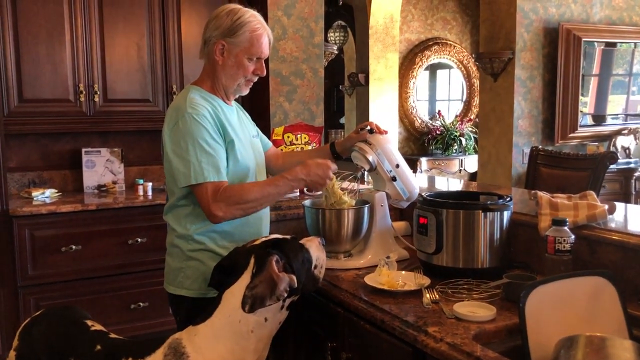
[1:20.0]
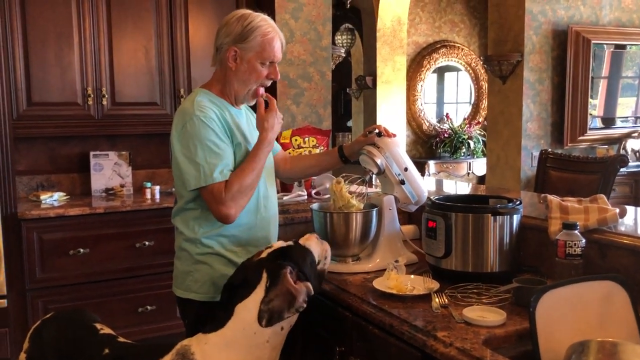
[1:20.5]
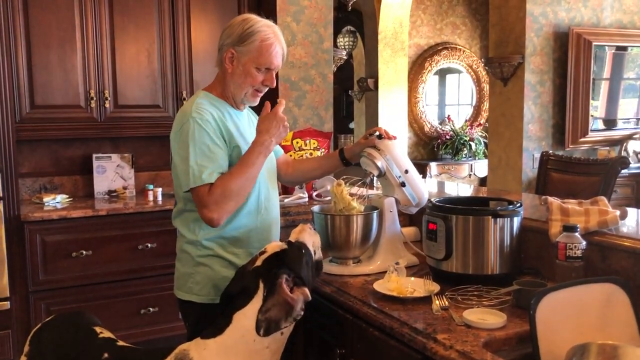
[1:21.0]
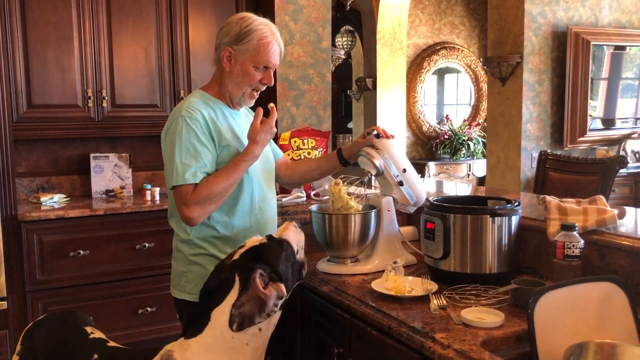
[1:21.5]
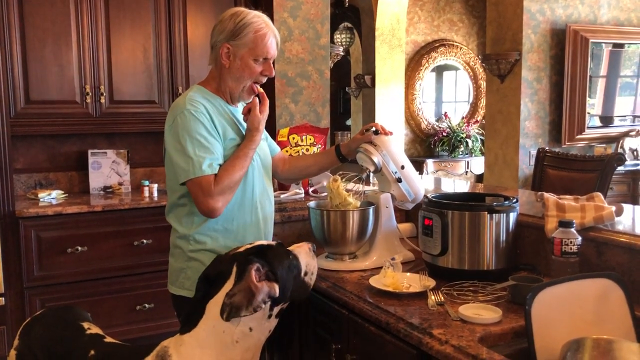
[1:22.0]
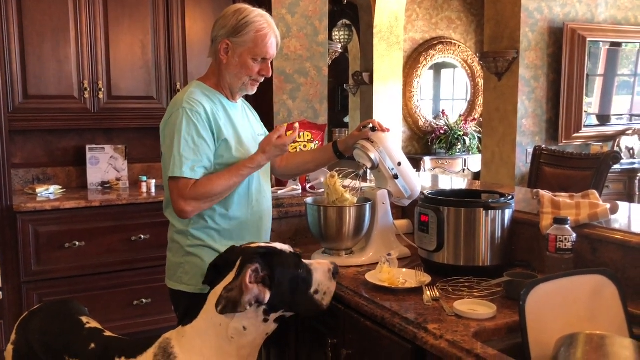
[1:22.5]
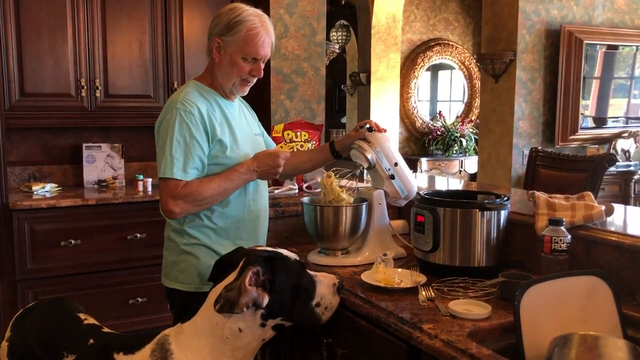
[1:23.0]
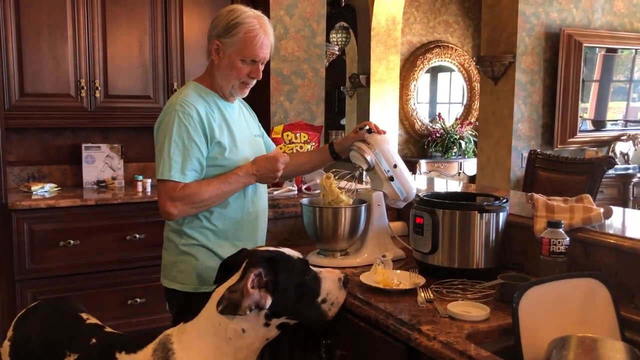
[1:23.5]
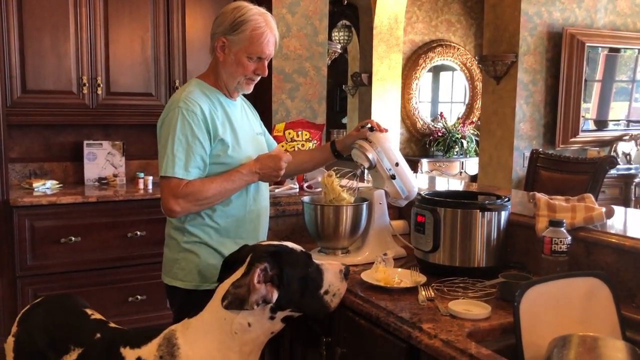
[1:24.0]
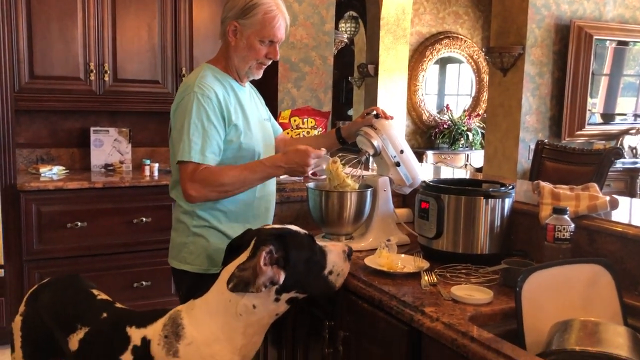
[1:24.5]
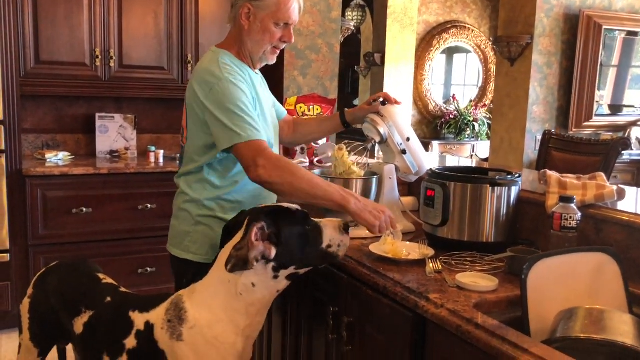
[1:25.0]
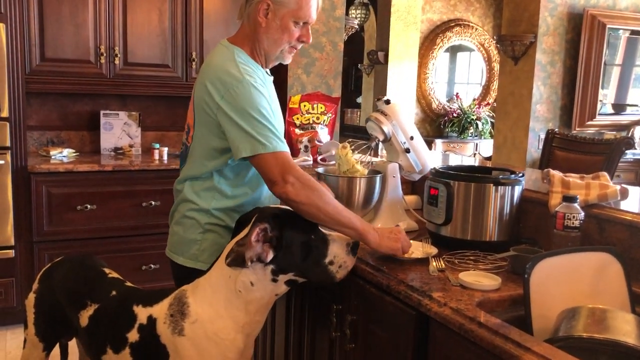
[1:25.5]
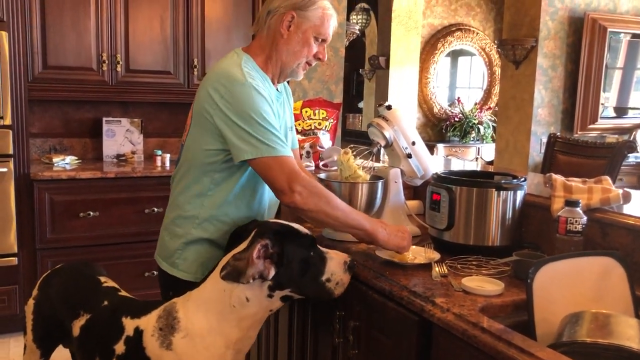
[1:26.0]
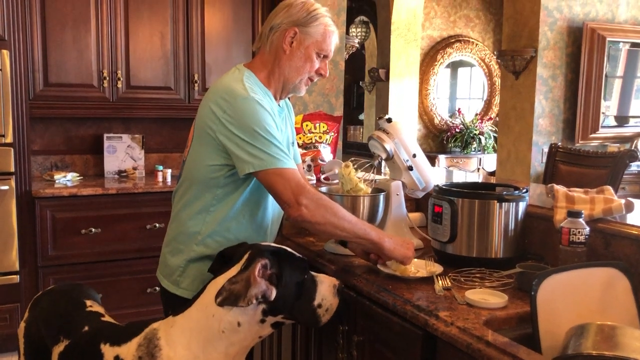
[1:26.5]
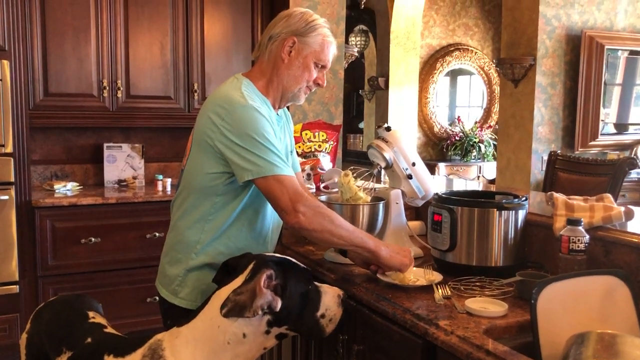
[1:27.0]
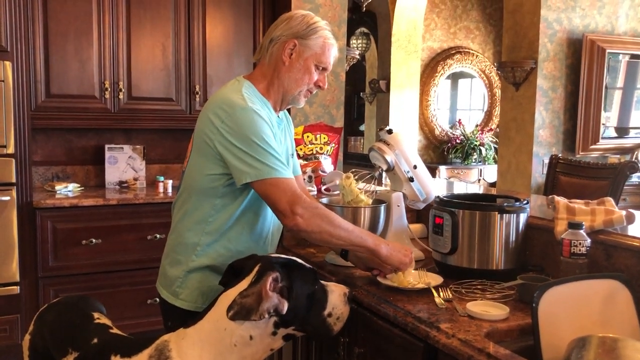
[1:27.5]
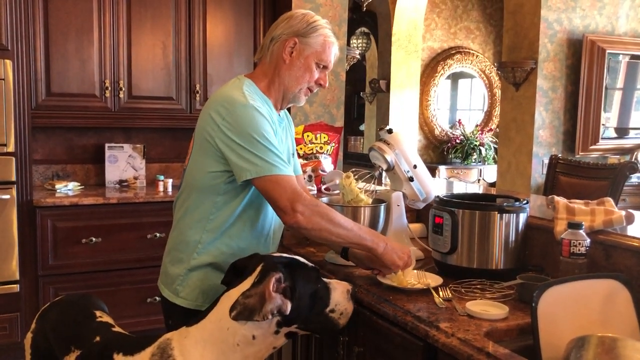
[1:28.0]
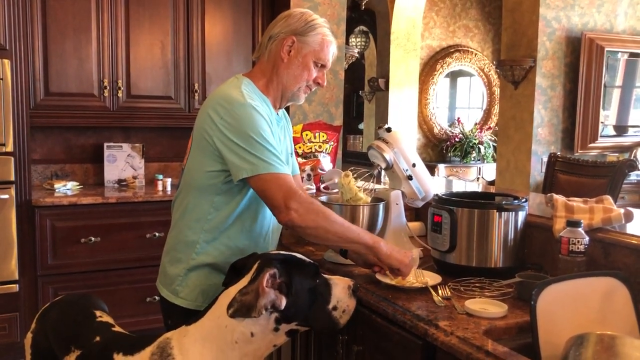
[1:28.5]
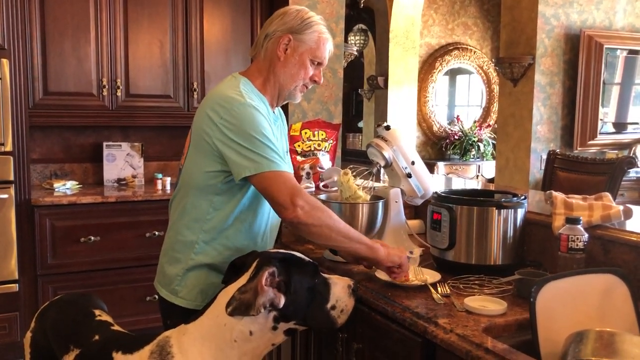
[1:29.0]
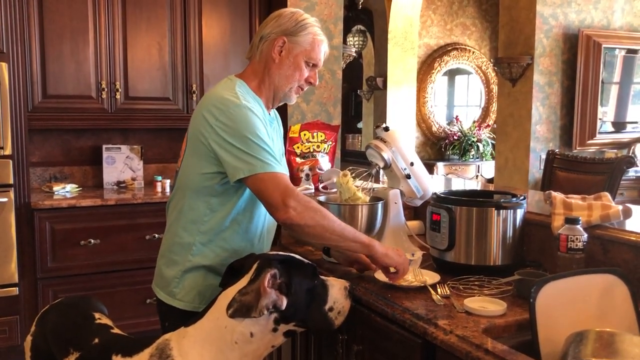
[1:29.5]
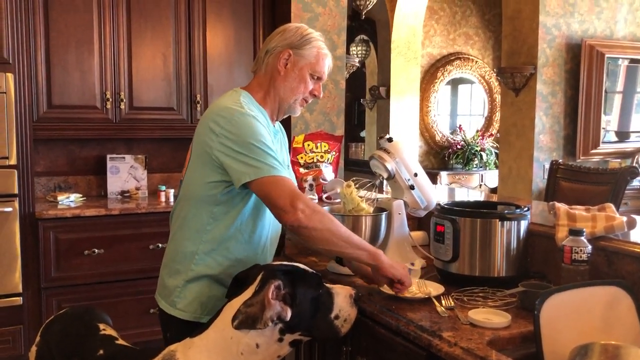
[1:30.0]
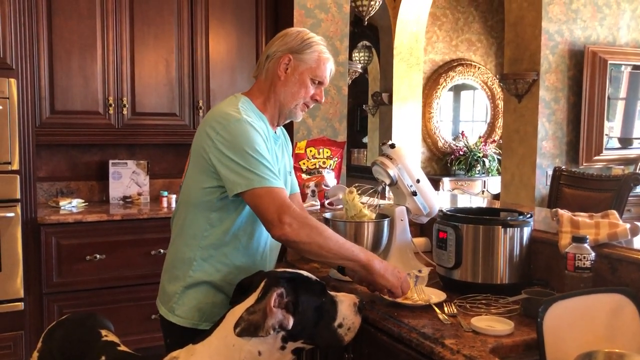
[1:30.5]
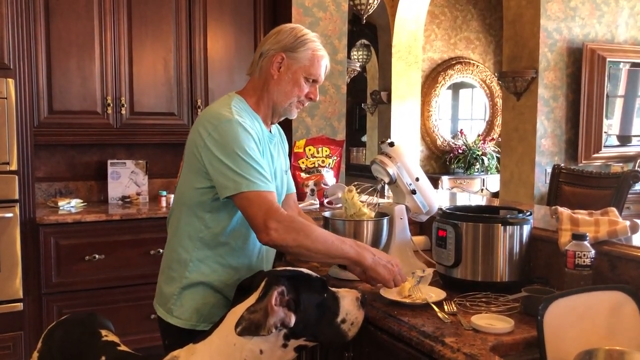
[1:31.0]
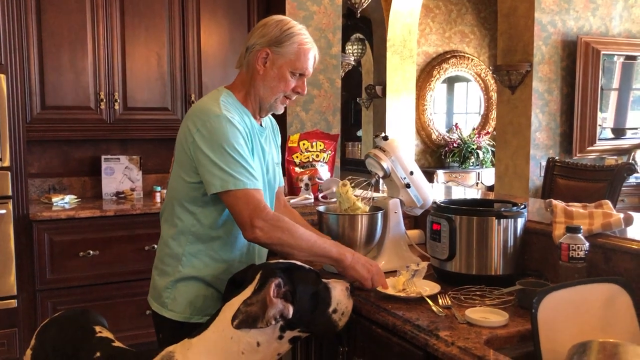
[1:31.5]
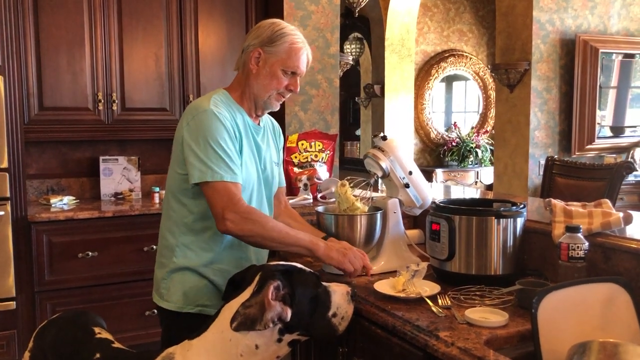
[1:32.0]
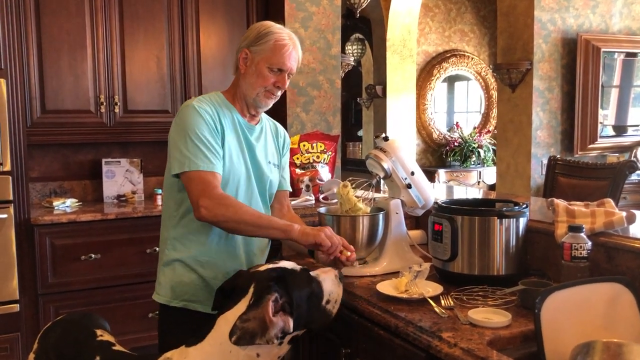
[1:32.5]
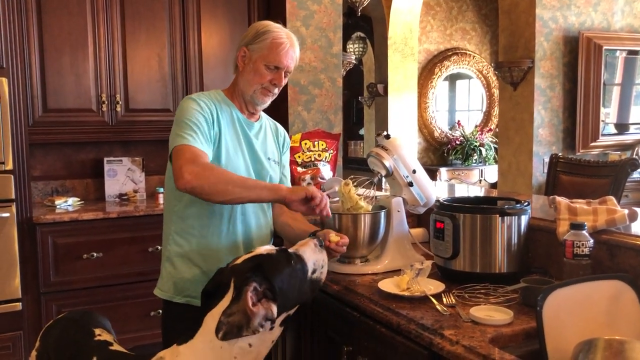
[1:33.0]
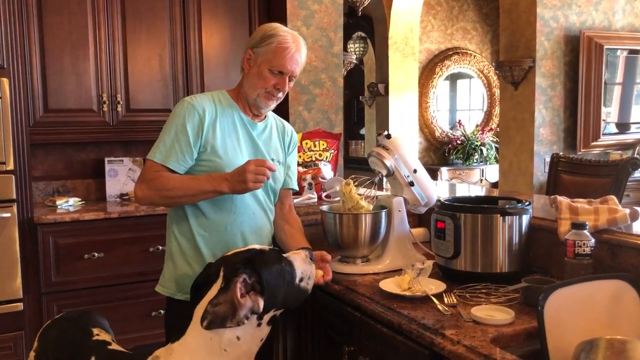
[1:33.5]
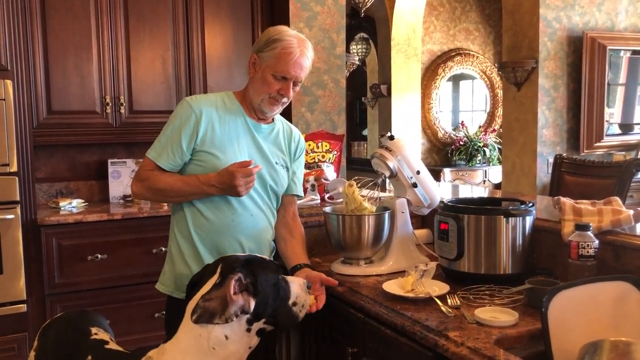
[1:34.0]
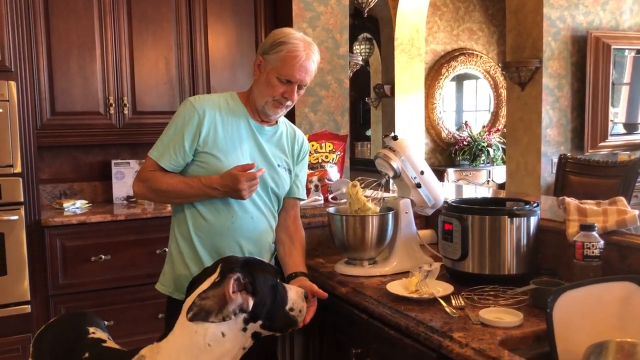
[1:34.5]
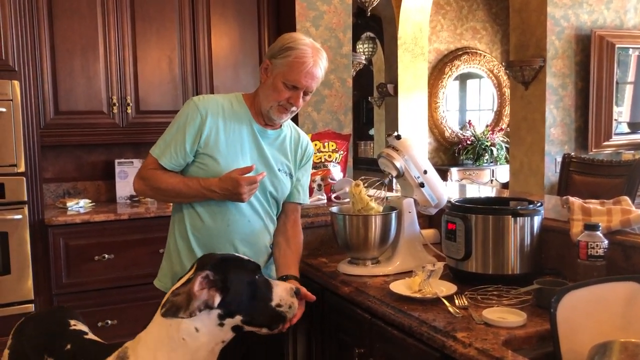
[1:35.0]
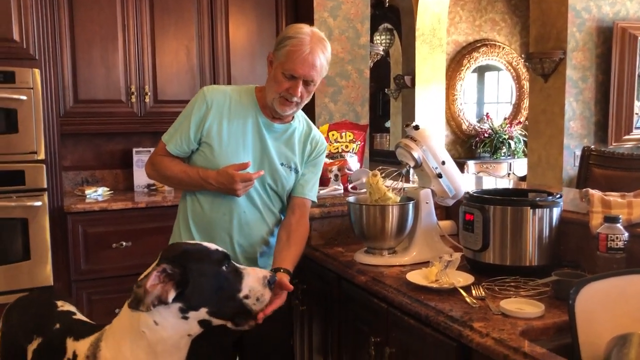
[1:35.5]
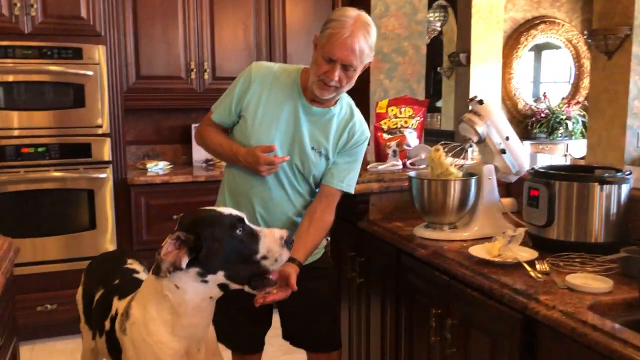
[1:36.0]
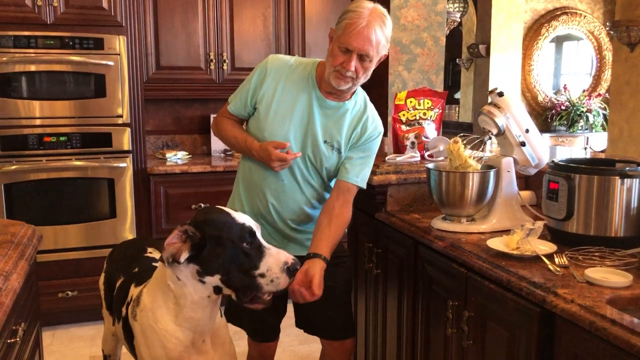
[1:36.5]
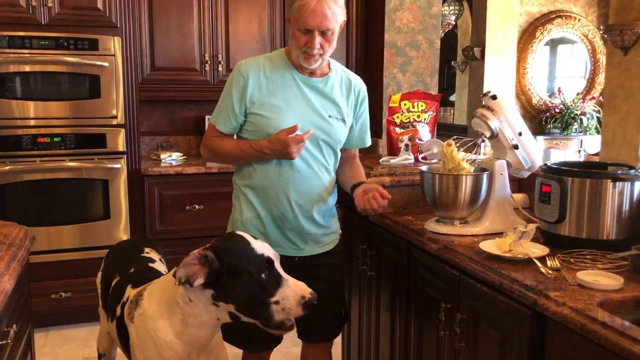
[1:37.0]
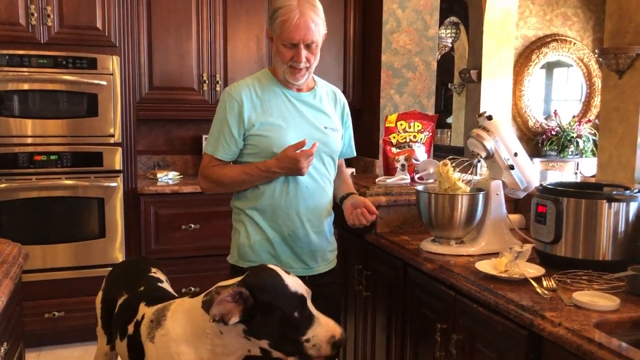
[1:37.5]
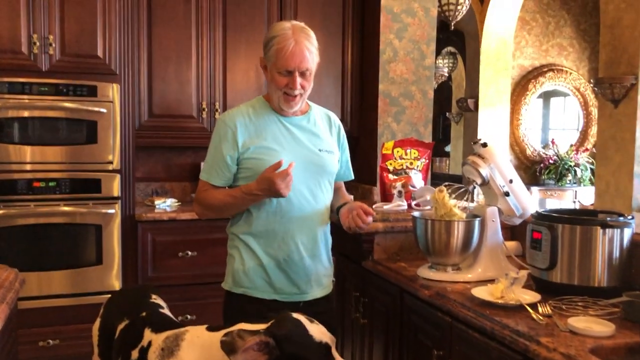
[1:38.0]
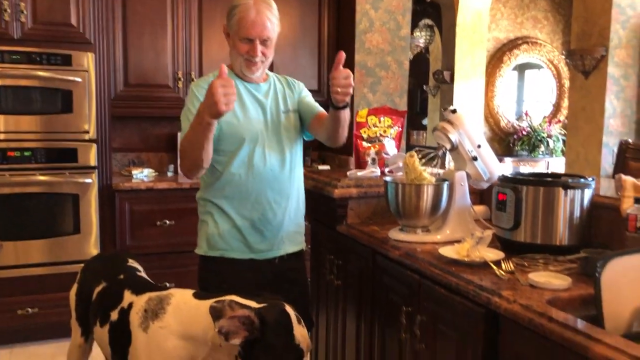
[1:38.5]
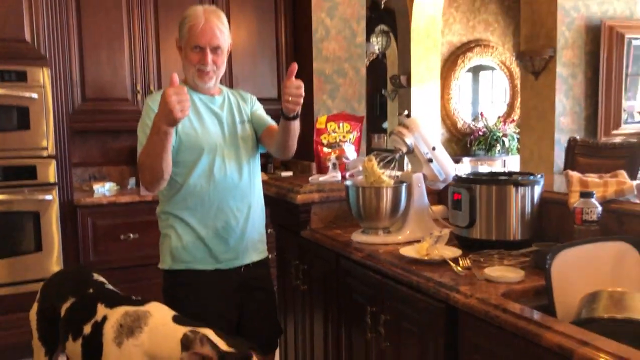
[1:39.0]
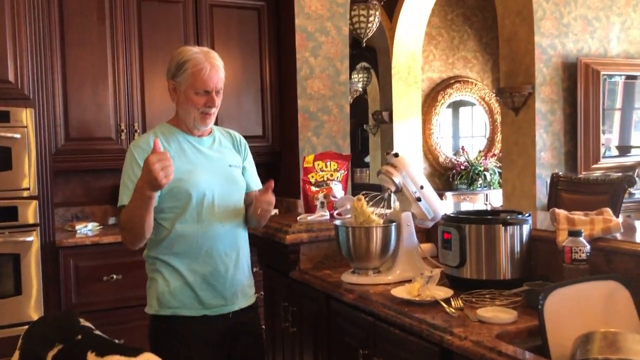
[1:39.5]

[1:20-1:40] The kitchen is still very brown themed, with everything in place: the pressure cooker and a fork are still on the island, the power aid bottle is still there, and so is the butter. The Caucasian man in a light blue shirt and brown shorts lifts up the electric whisk. He tastes the mashed potatoes, then dips leftover mashed potato into the butter and feeds it to the black and white dog. Behind him on the counter there is something that looks like toothpicks. There are light bulbs in the kitchen and dining area, as well as two mirrors and a plant under one mirror.